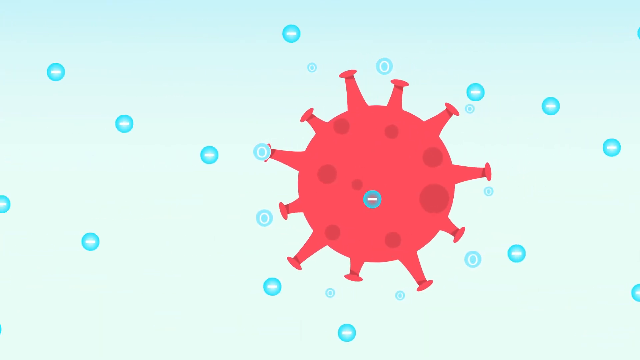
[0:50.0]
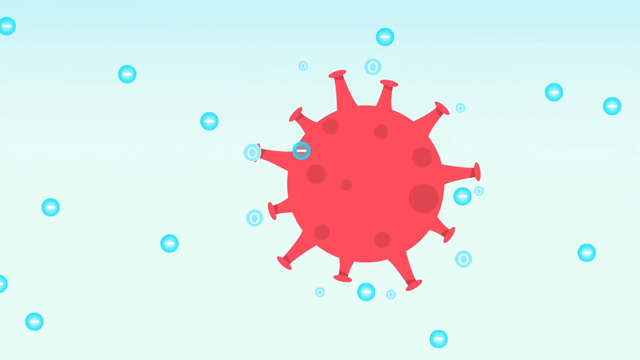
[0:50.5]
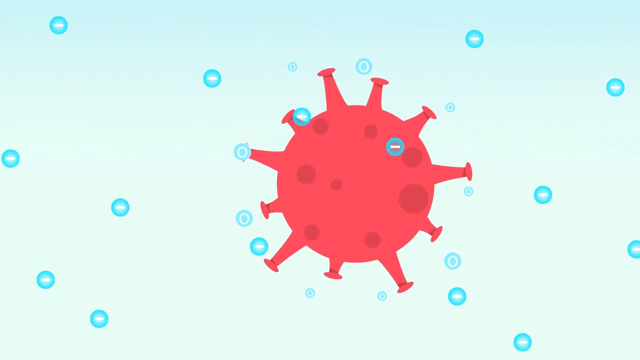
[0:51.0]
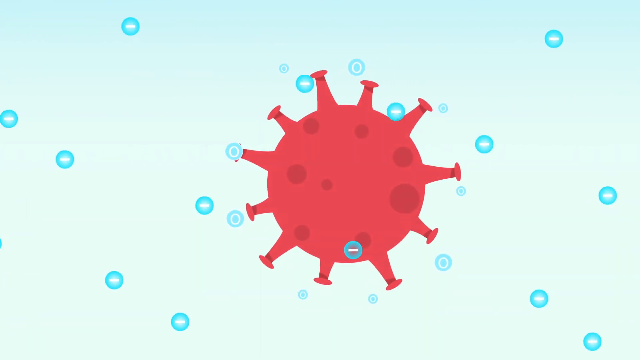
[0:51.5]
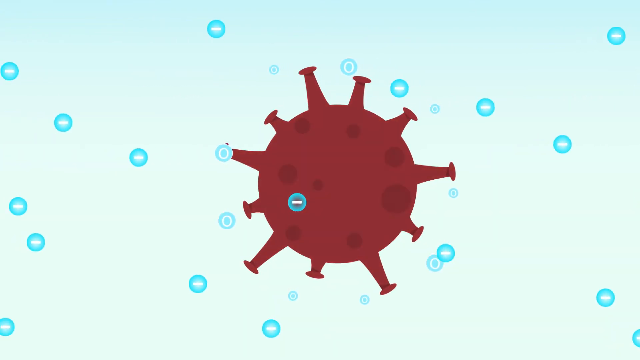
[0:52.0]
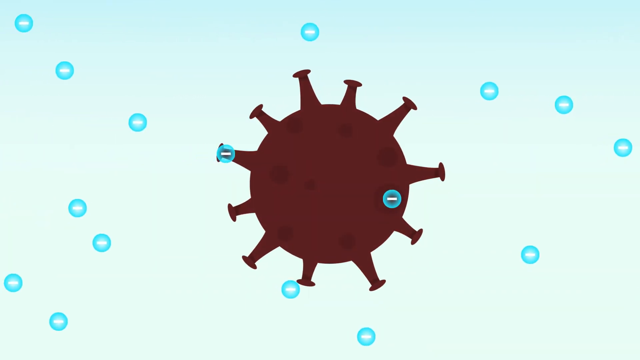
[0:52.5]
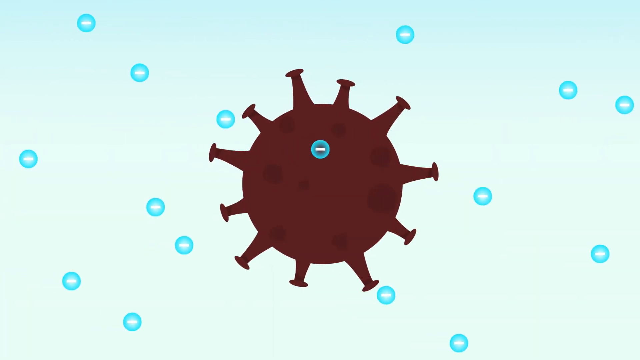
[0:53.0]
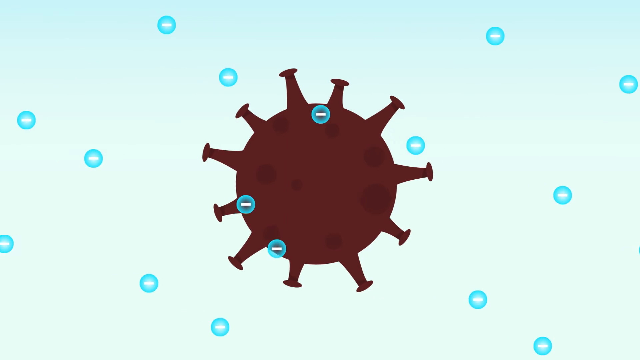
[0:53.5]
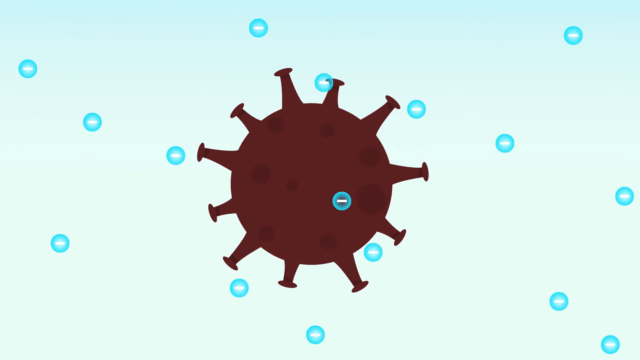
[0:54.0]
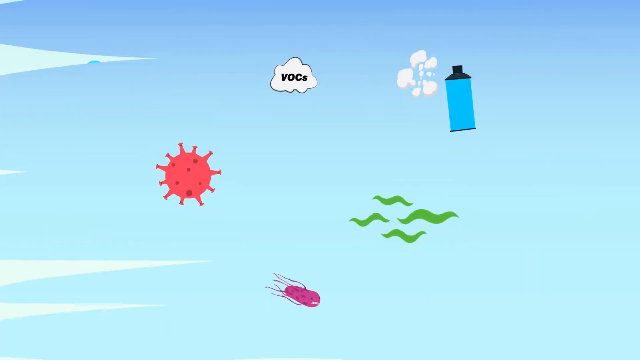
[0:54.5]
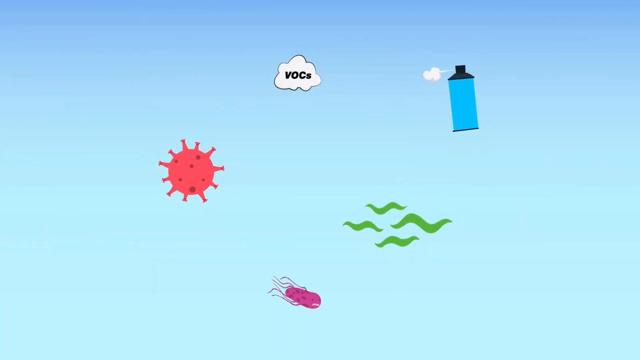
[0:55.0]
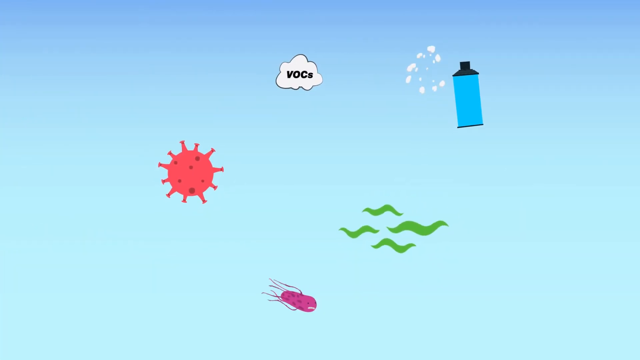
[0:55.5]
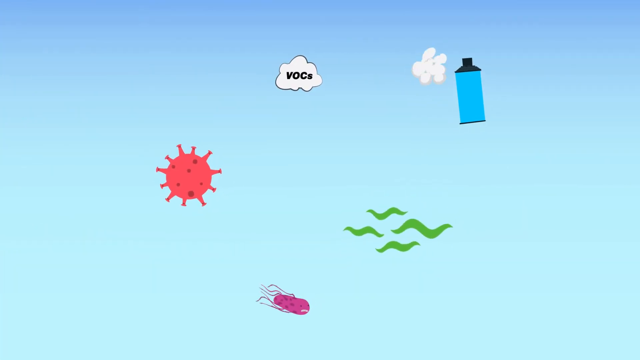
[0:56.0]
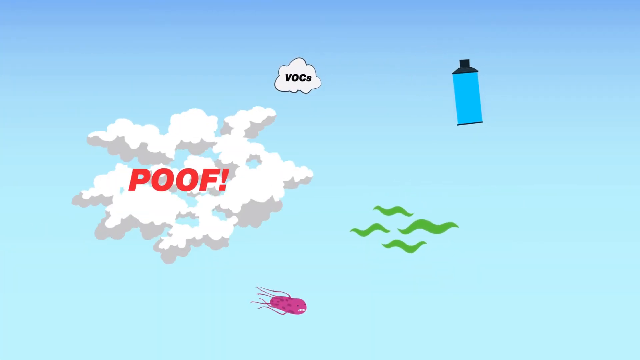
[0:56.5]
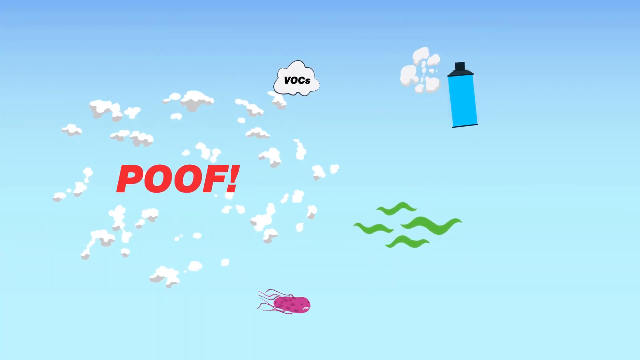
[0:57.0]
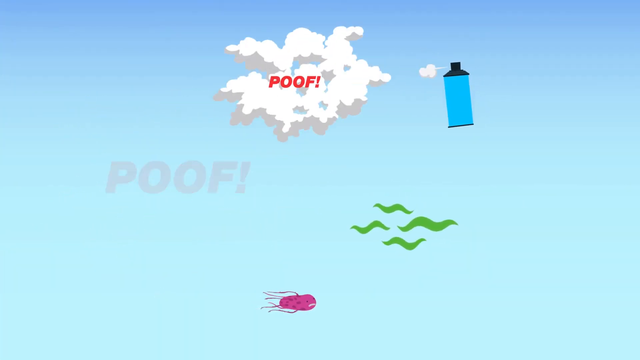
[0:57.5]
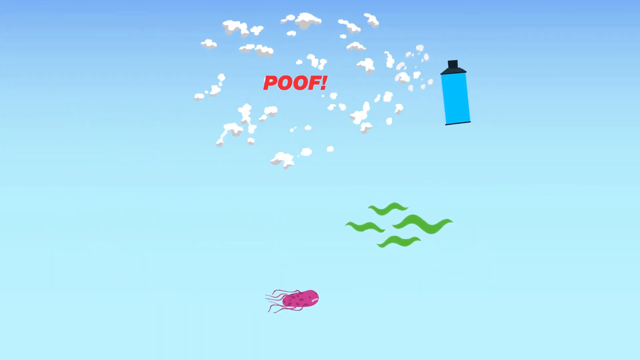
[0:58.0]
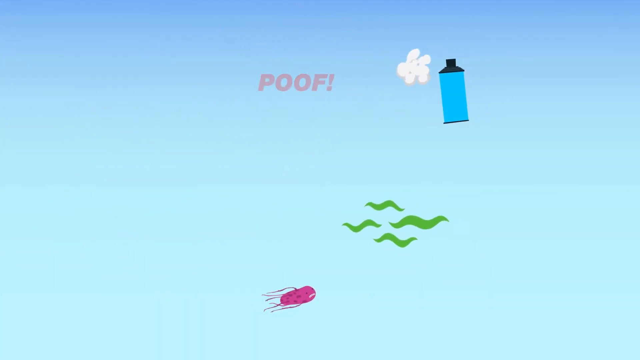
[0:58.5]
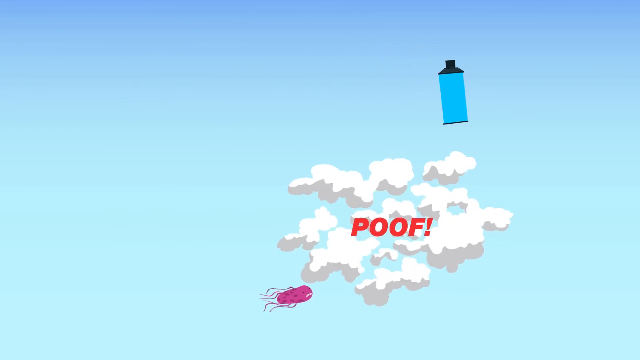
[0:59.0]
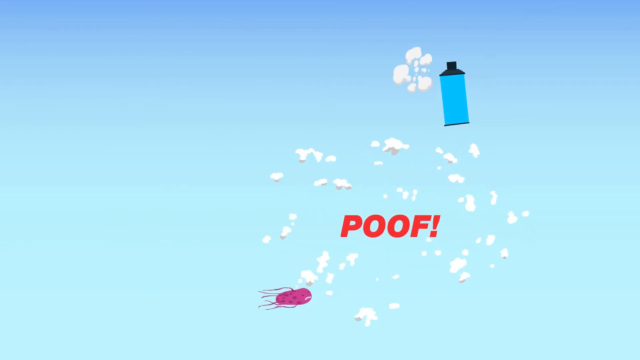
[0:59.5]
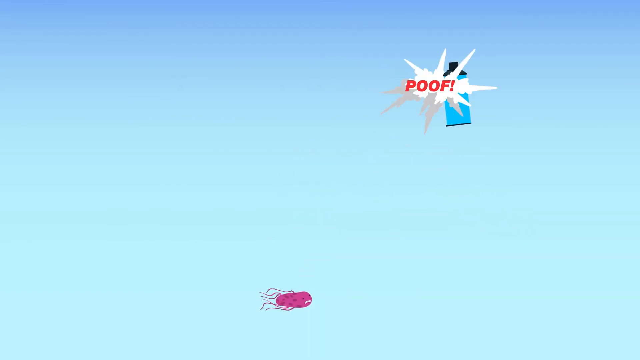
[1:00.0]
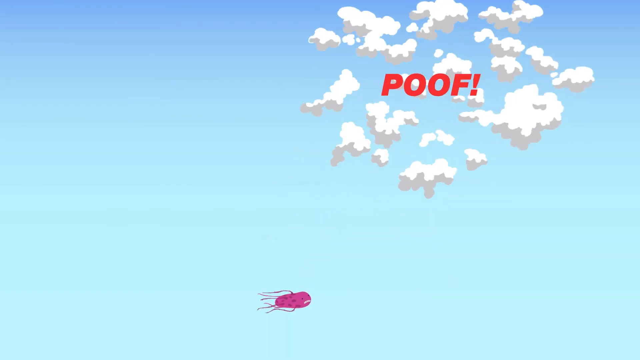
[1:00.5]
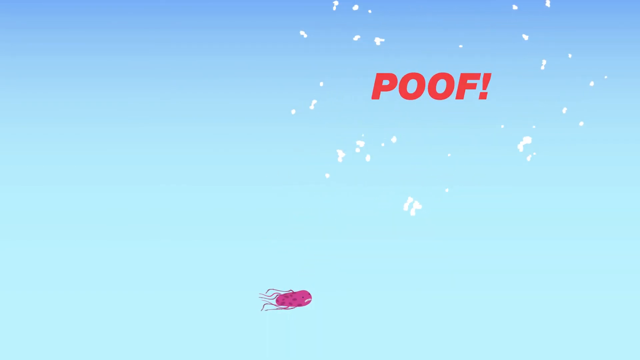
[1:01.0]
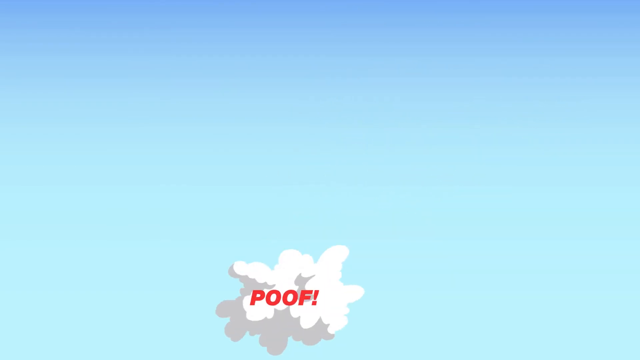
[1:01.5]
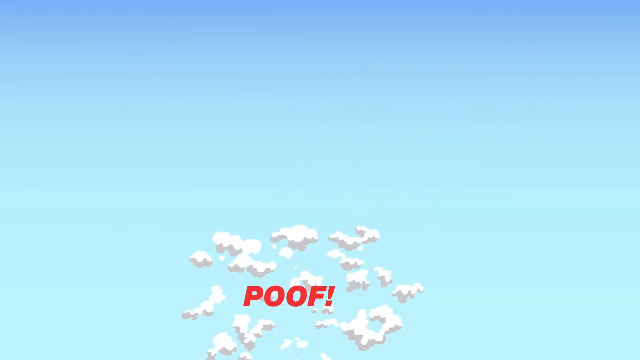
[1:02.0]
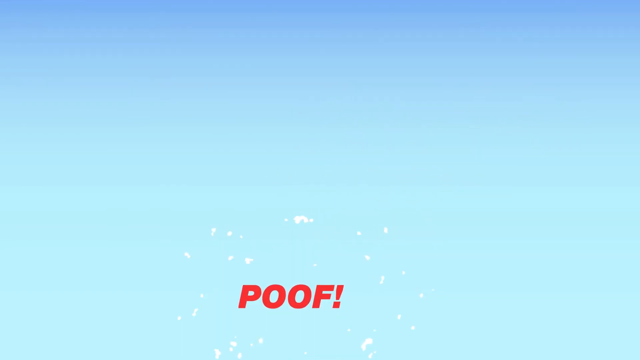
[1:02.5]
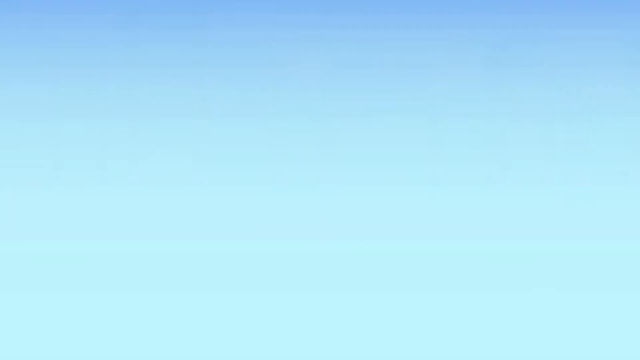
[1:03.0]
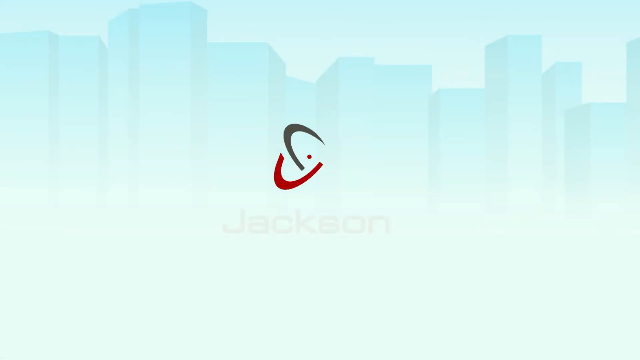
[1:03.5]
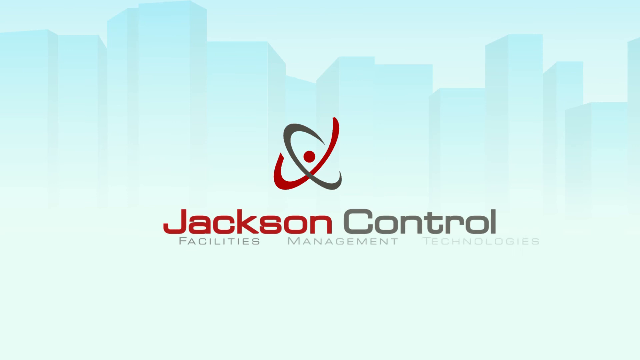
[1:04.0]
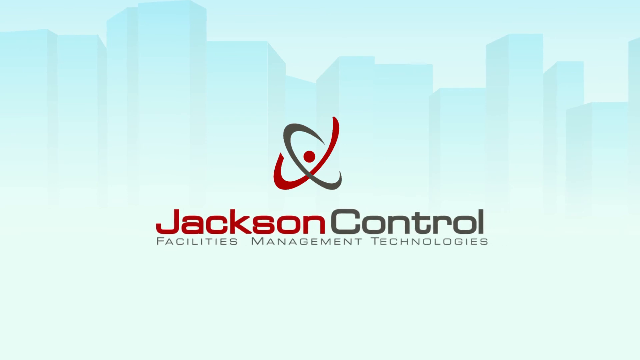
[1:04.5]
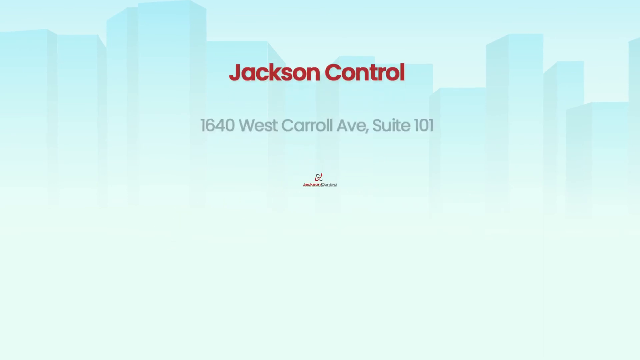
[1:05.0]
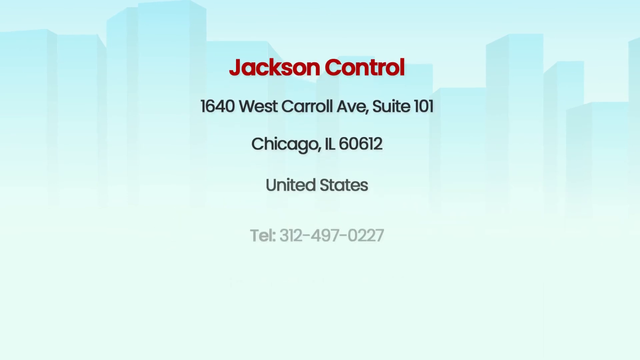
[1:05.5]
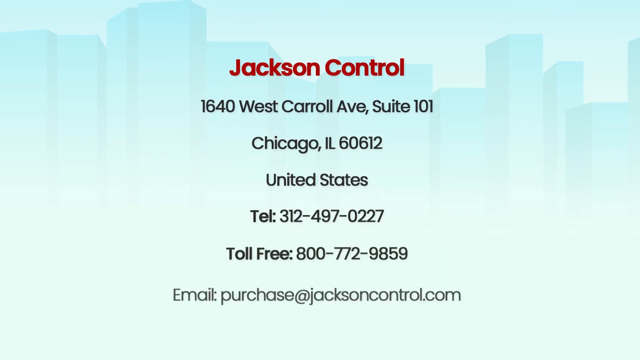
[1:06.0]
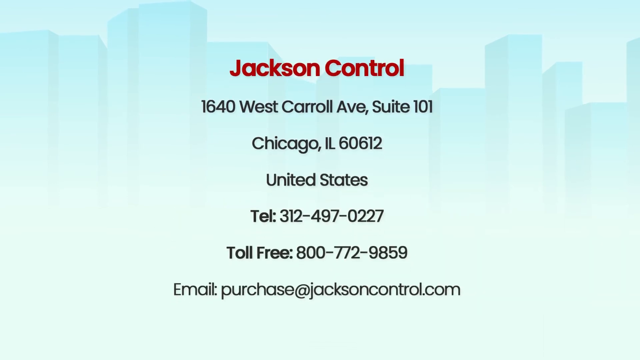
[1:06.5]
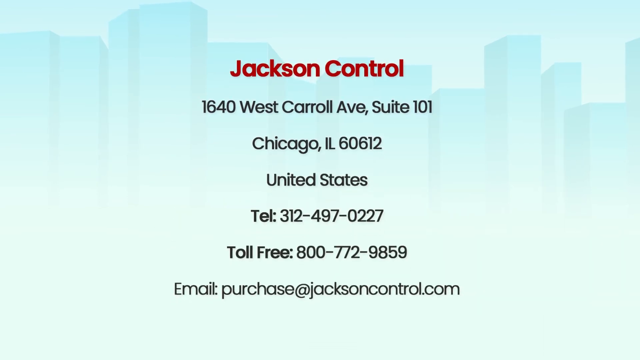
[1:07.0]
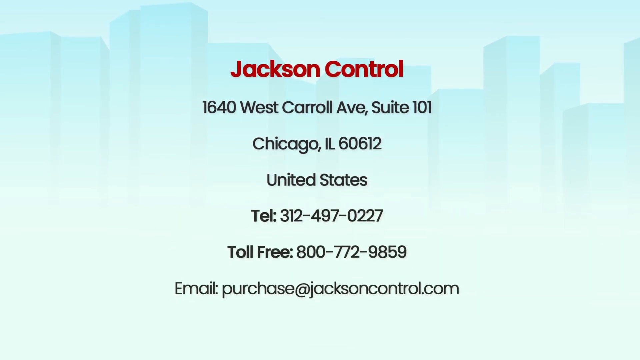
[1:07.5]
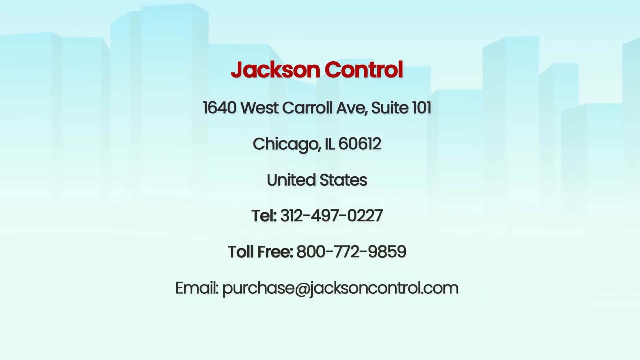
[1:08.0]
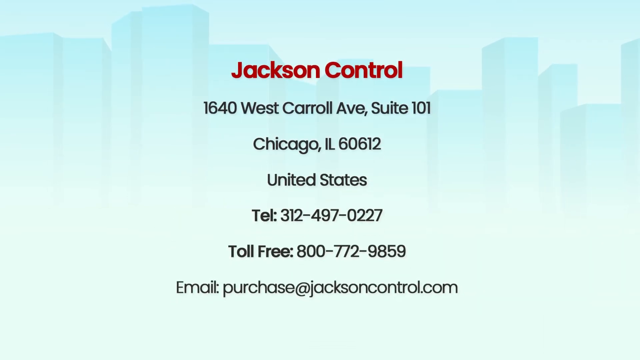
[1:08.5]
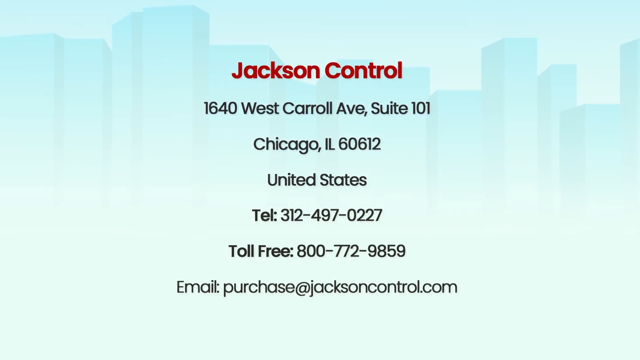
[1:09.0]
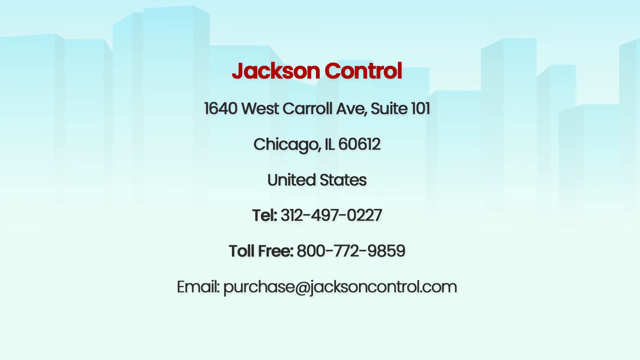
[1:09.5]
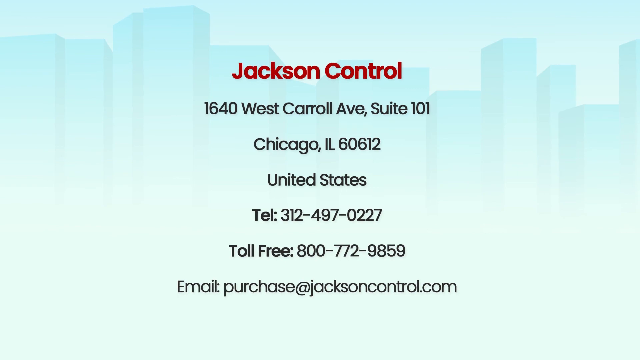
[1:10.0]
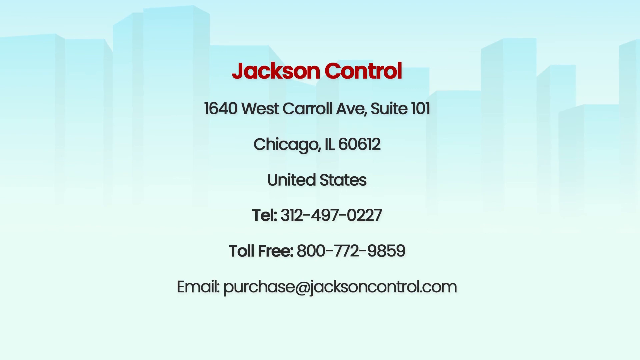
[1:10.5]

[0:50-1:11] A diagram with a light blue background shows one of the germ symbols in deep red in the middle, with a number of blue circles containing white minus signs floating around it. The next scene, also on a light blue background, shows several symbols: a cloud with the word "VOCs" inside it, the red germ symbol, an aerosol can, a symbol with four green squiggles on it, and at the bottom one of the purple squid-like symbols. Smoke appears over each of these symbols, the word "poof" appears in red, and each symbol disappears. The video ends on an end screen with a background that looks like a cityscape, the Jackson Control logo in the center, and below it the text "Facilities Management Technologies."